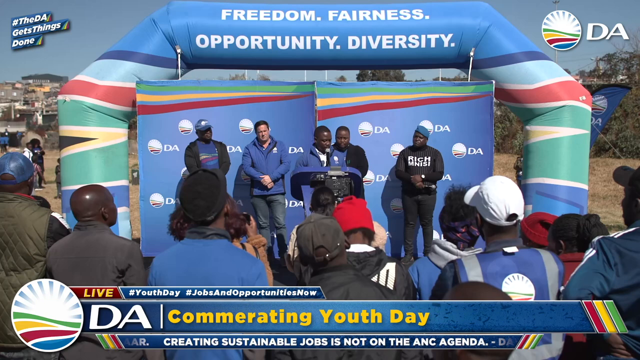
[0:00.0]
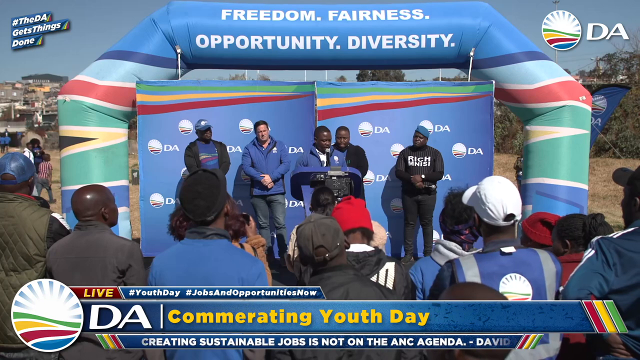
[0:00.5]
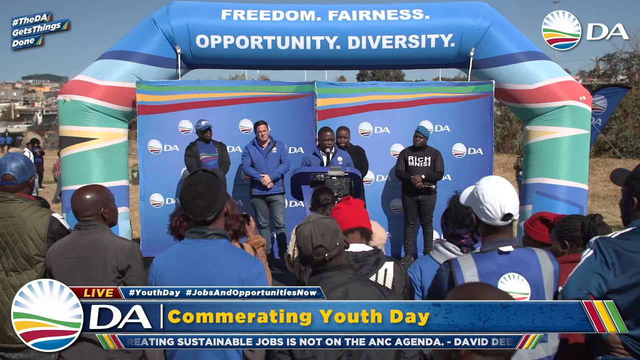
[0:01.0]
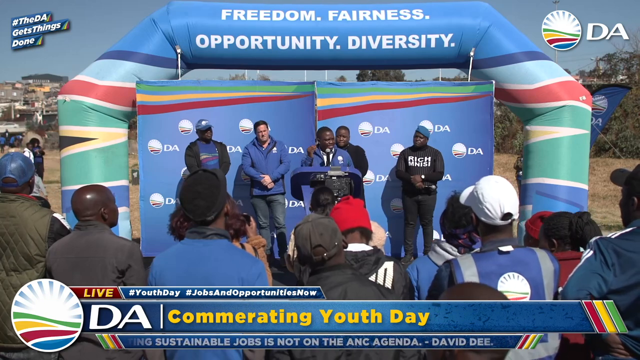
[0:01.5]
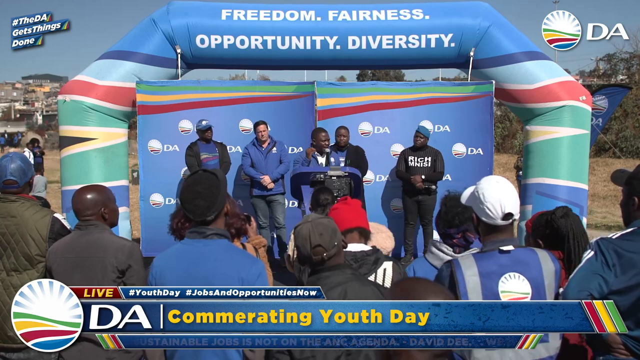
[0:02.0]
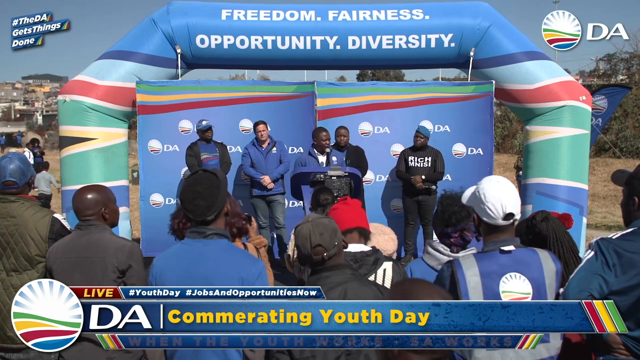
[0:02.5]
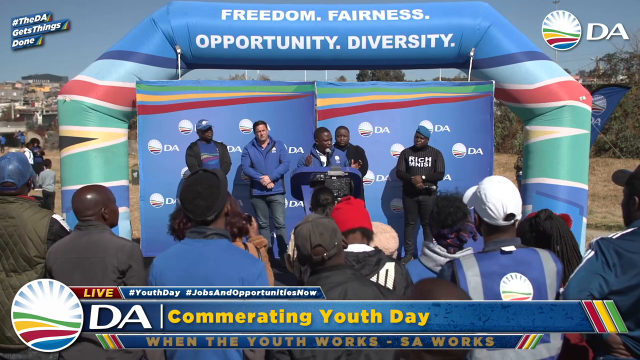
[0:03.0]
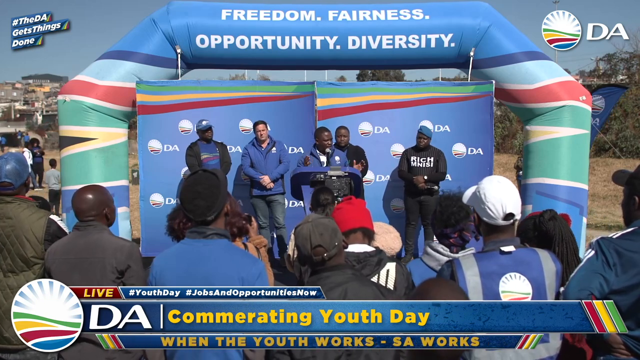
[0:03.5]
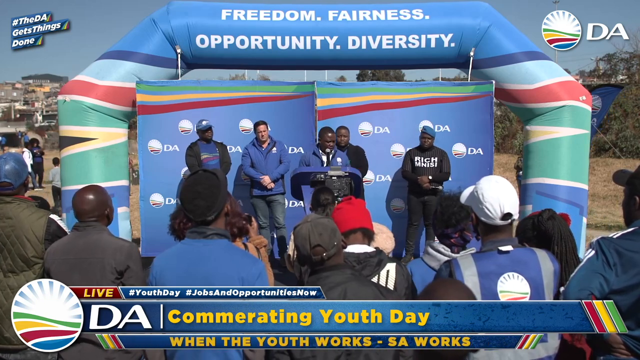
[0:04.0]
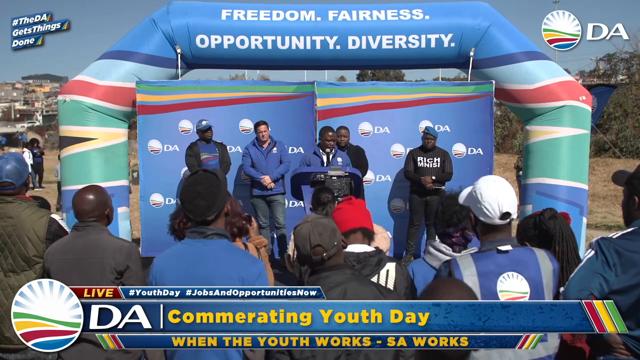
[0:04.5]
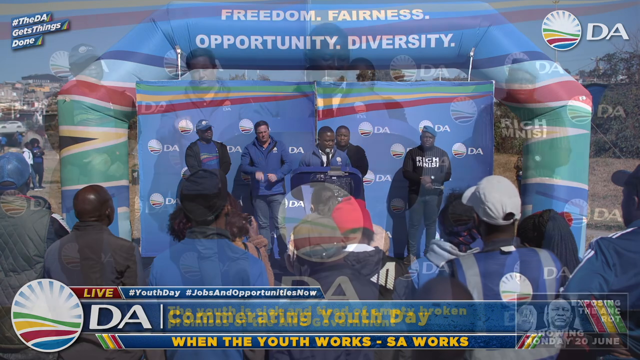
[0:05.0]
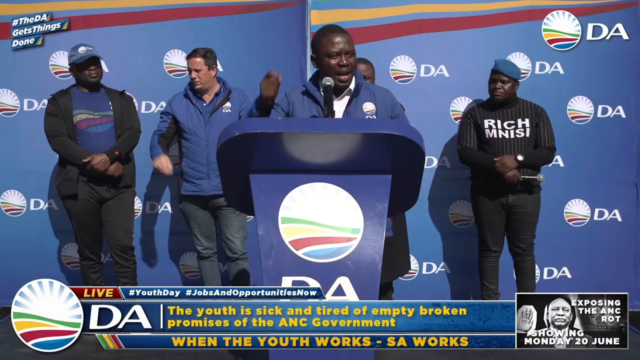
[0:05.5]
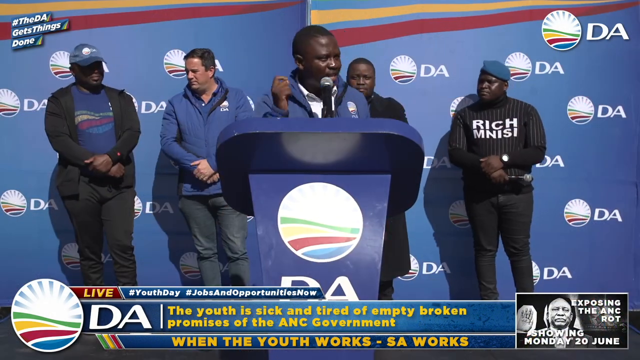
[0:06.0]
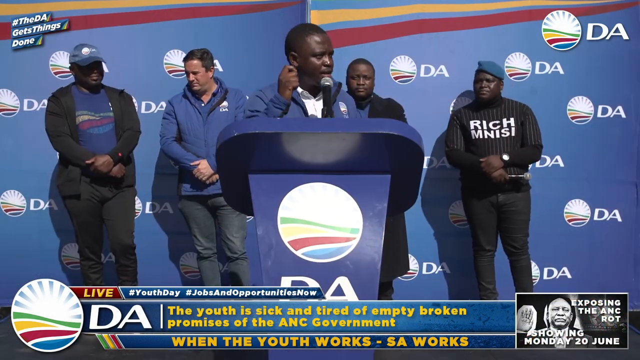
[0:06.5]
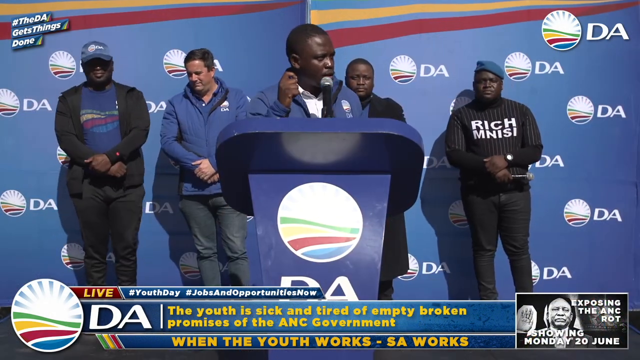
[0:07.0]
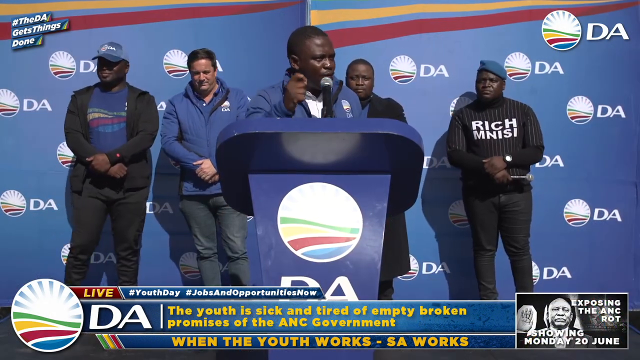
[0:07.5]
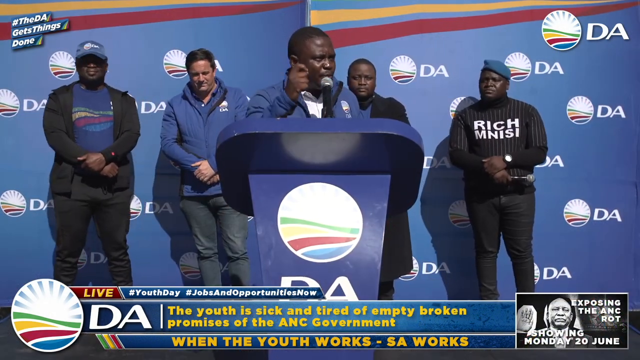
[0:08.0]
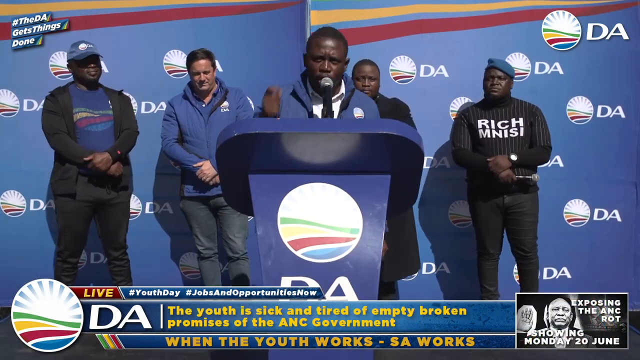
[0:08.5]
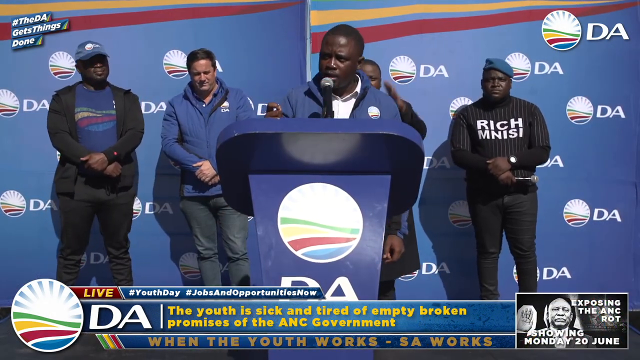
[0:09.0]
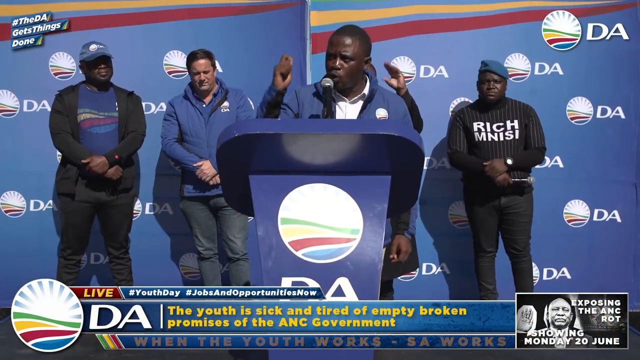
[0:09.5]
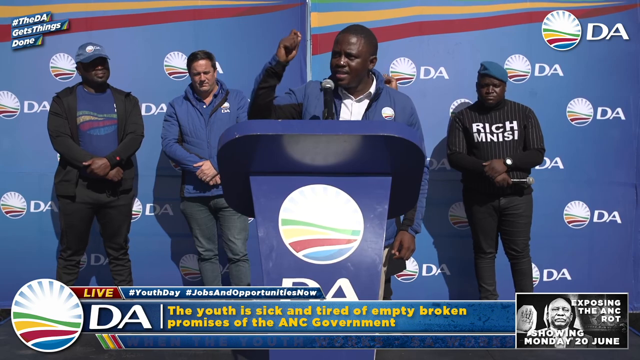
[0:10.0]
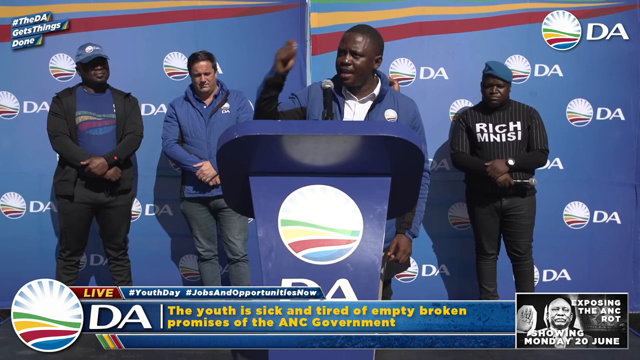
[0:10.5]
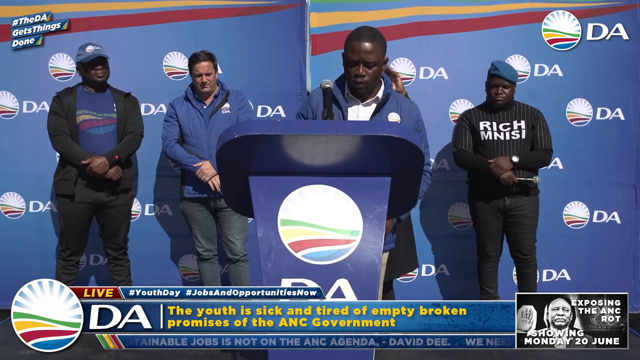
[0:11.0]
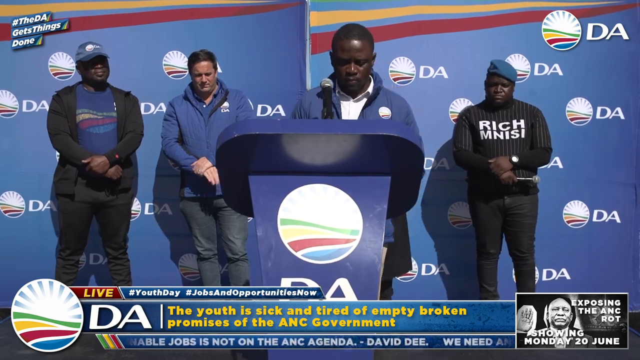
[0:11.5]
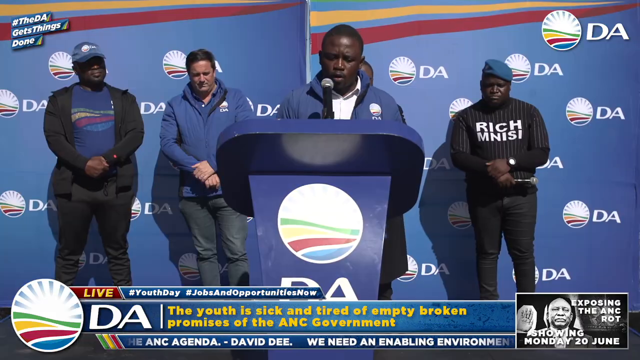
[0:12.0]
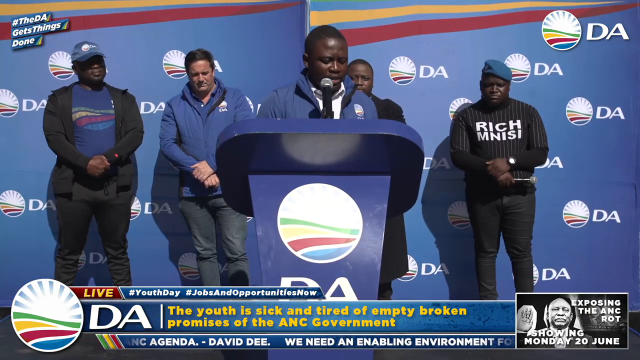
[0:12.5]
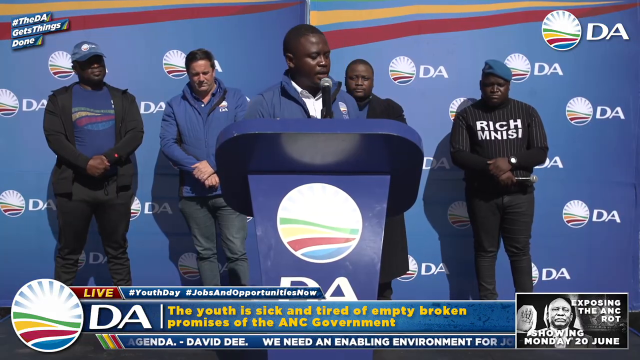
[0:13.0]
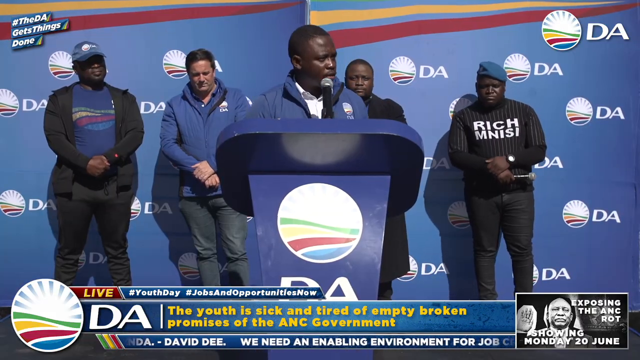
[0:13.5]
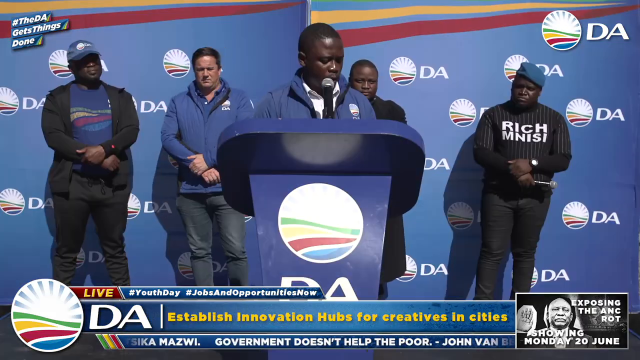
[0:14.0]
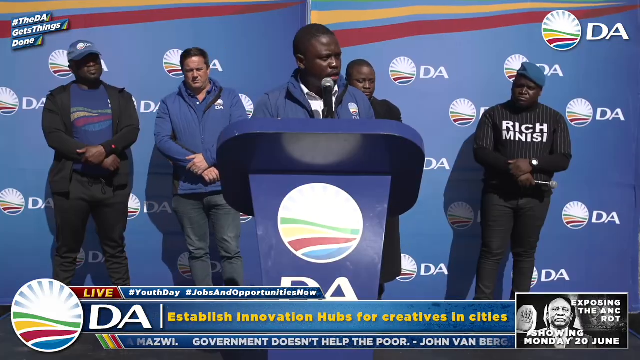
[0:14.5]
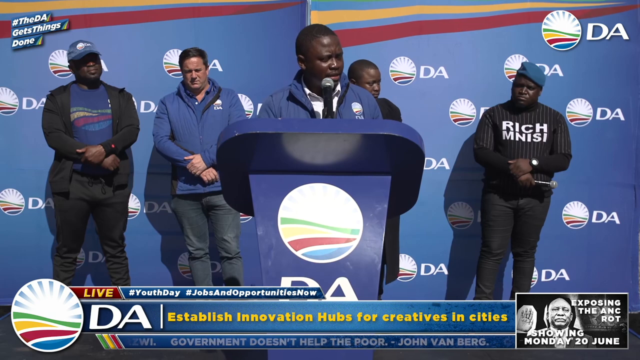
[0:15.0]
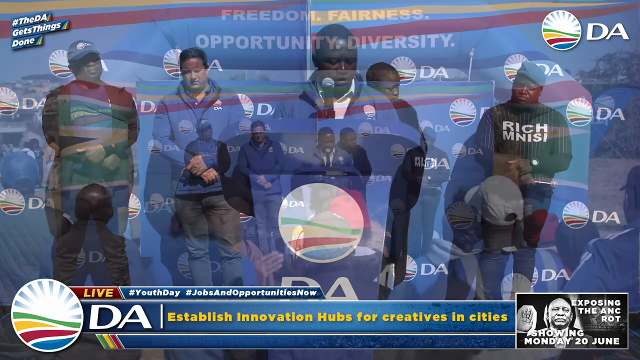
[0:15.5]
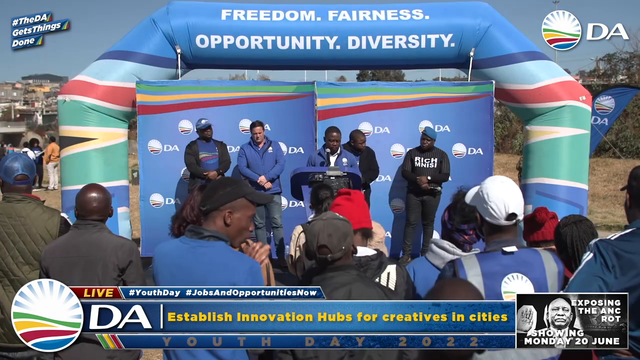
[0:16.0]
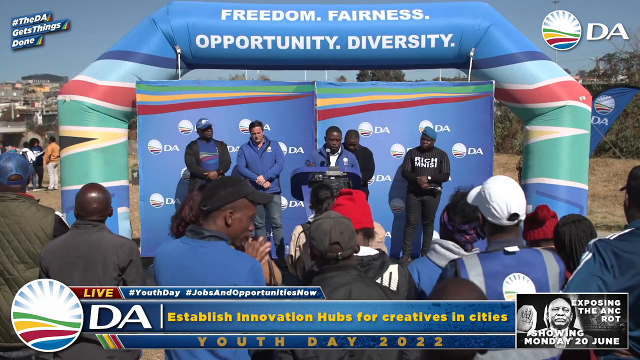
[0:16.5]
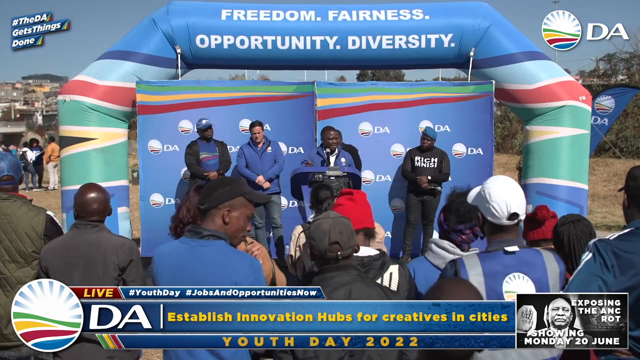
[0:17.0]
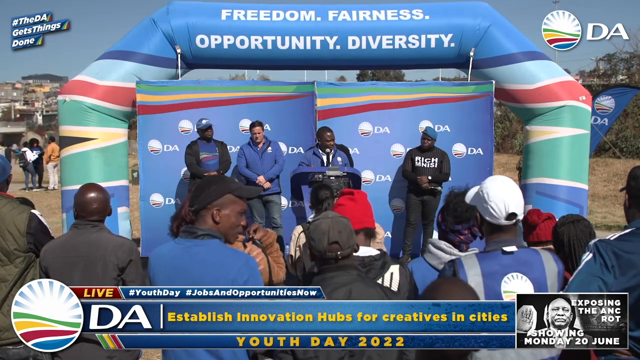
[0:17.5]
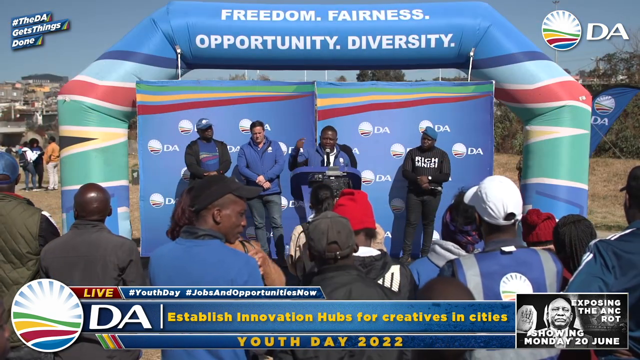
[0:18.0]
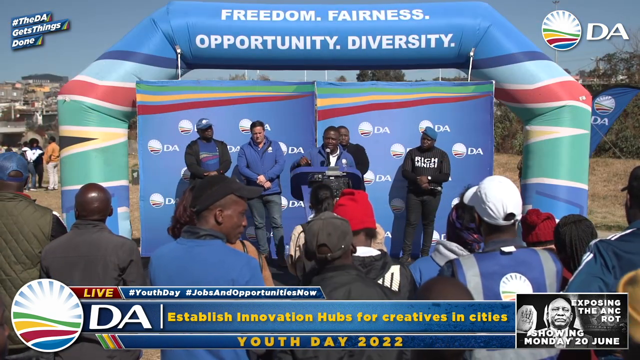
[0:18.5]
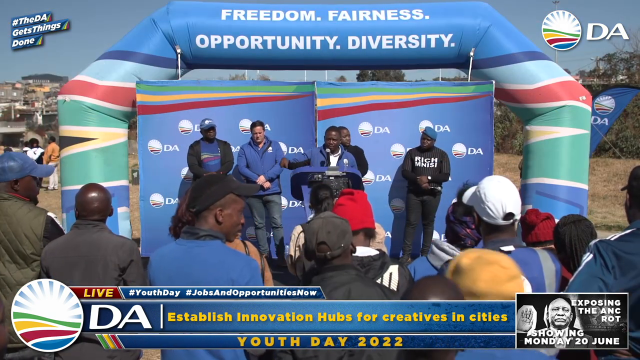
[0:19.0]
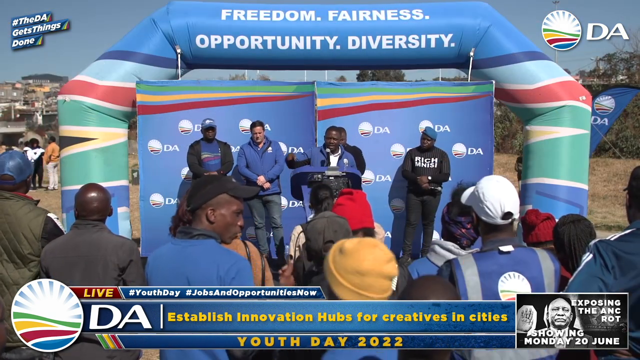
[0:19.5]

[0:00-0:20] The video opens on several people gathered behind a podium. Above them is what looks like a blown-up archway that says "freedom, fairness, opportunity, diversity." A banner at the bottom reads "DA commemorating youth day." In a close-up, a speaker in a blue fleece jacket with a white shirt underneath speaks very passionately. Beneath him the ticker reads "the youth is sick and tired of empty broken promises of the ANC government," then changes to "establish innovation hubs for creatives in cities." The video returns to the wide view, showing the backs of people in the crowd; in the lower left, one man talks to a man beside him in a baseball cap. Behind the podium is a multicolored logo that looks somewhat like a hill and says "DA." "DA" also appears in the upper right corner of the video, and the upper left corner reads "#the DA gets things done."